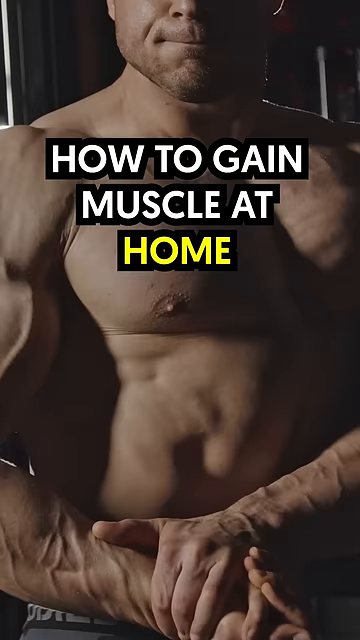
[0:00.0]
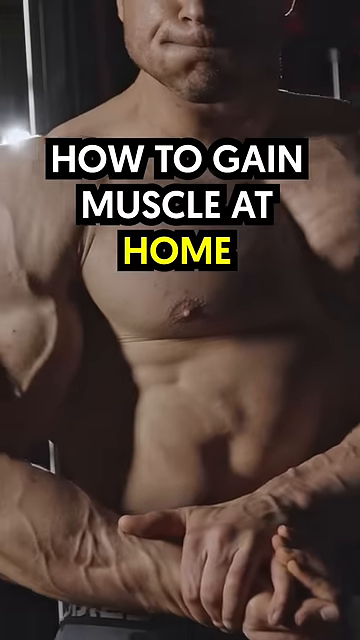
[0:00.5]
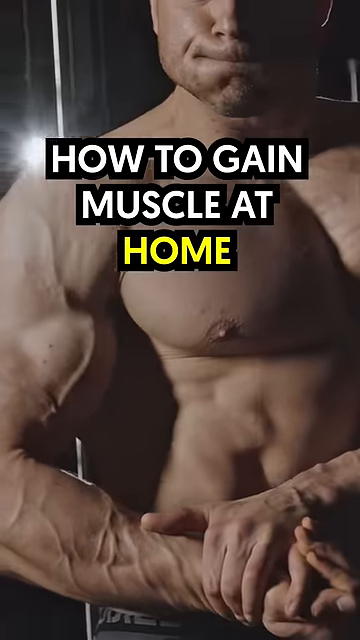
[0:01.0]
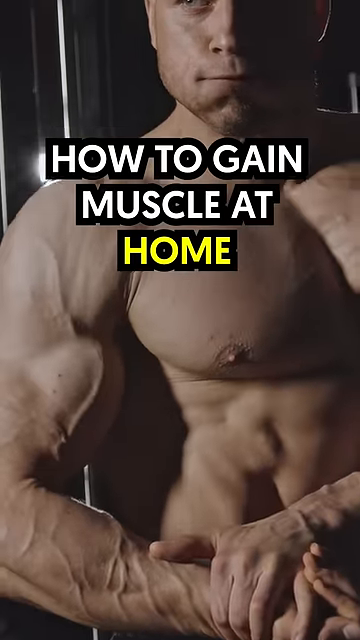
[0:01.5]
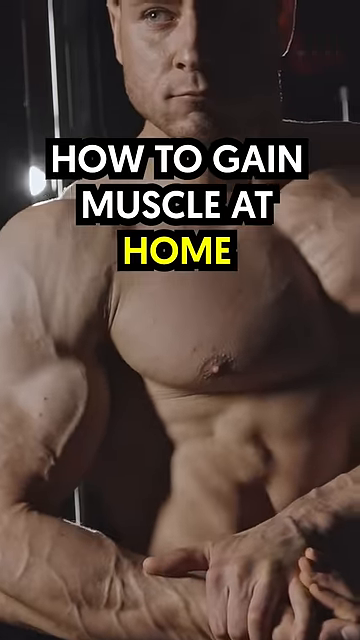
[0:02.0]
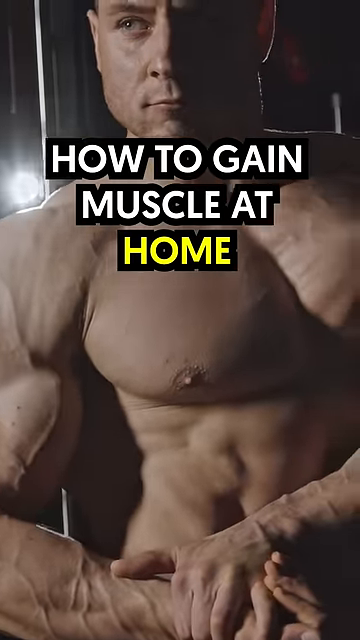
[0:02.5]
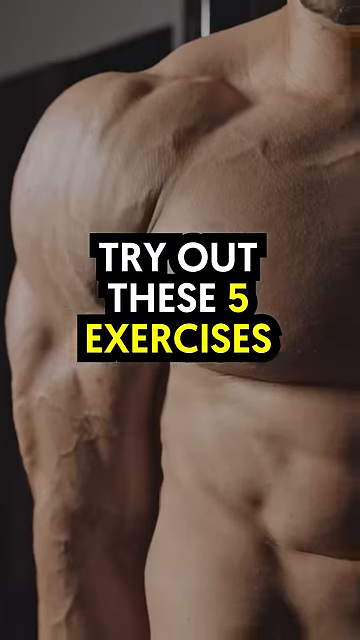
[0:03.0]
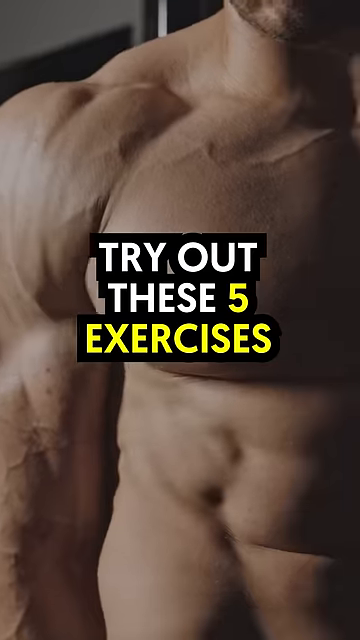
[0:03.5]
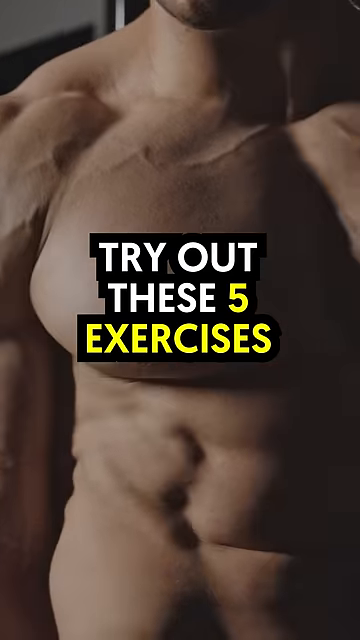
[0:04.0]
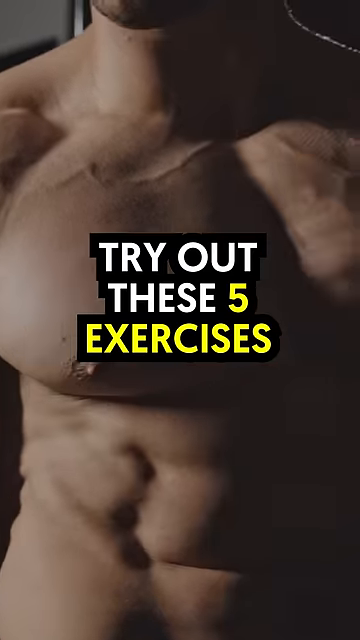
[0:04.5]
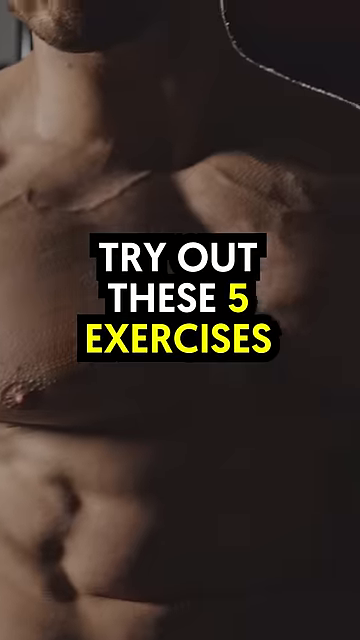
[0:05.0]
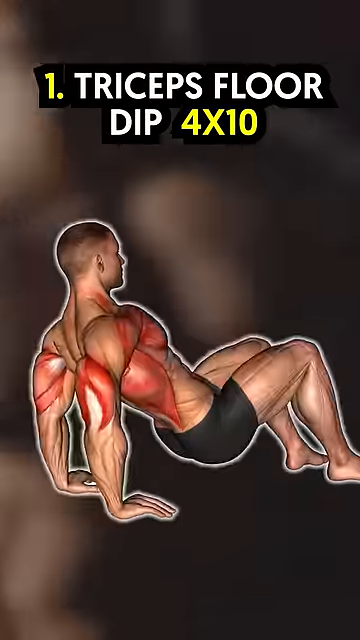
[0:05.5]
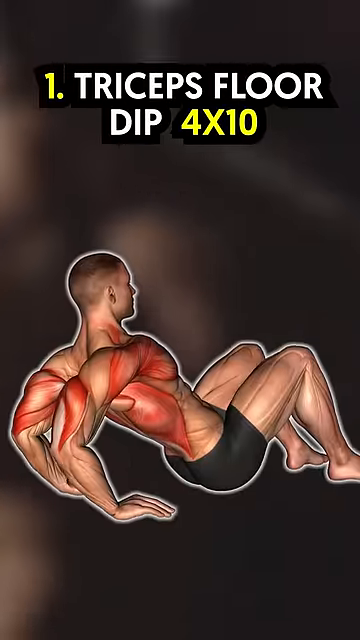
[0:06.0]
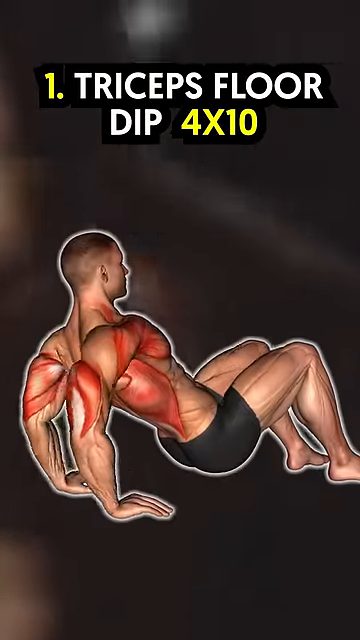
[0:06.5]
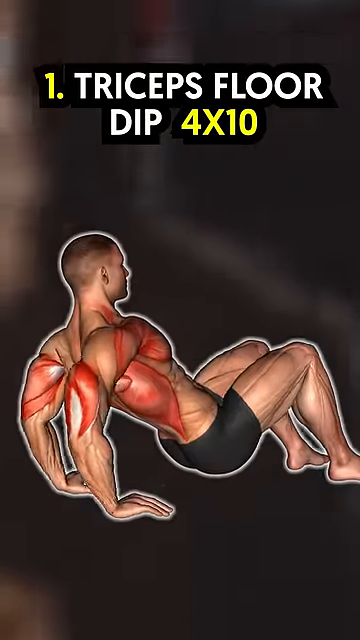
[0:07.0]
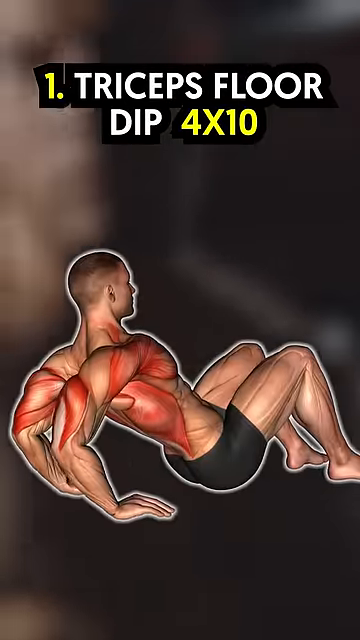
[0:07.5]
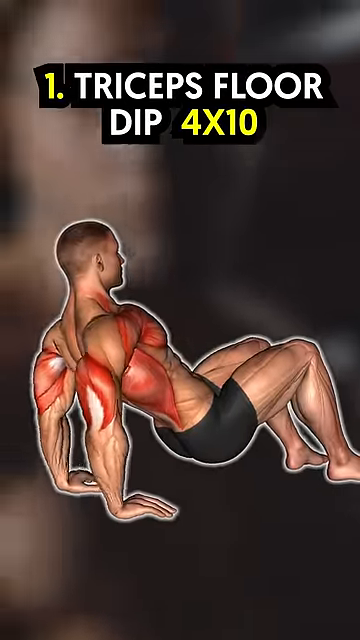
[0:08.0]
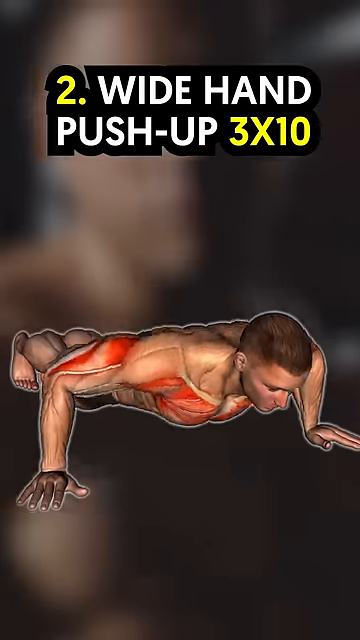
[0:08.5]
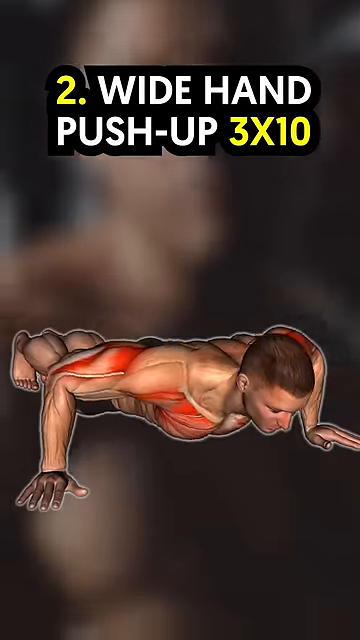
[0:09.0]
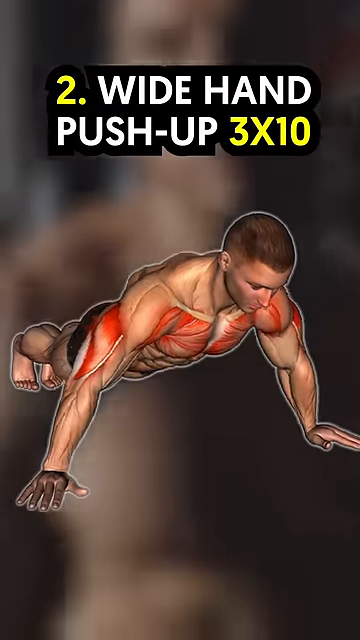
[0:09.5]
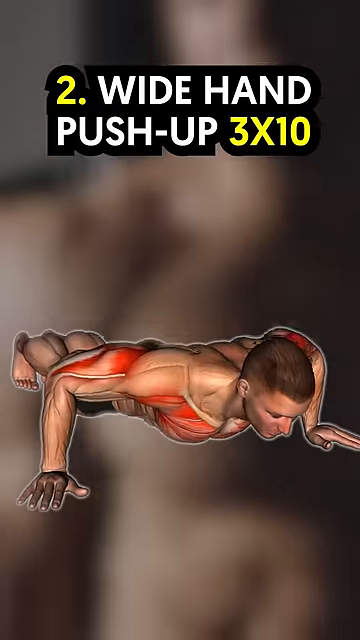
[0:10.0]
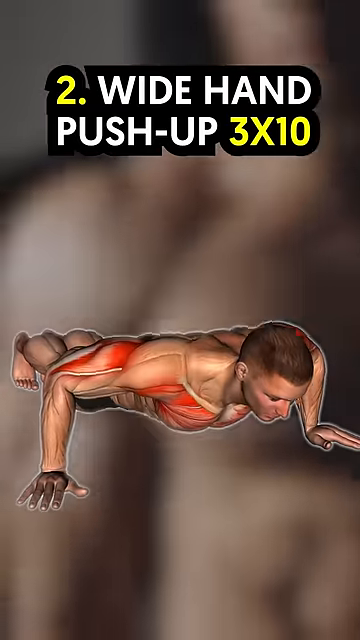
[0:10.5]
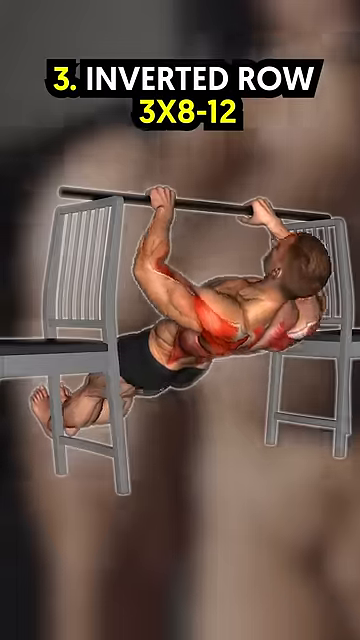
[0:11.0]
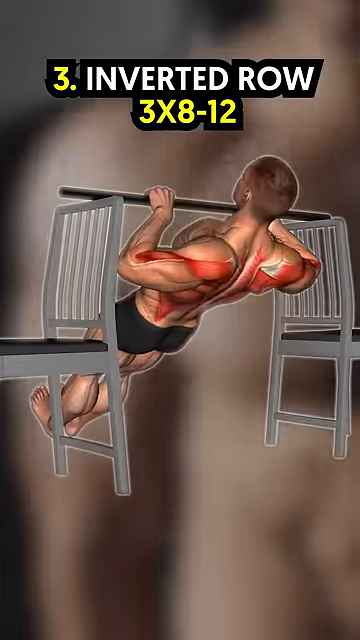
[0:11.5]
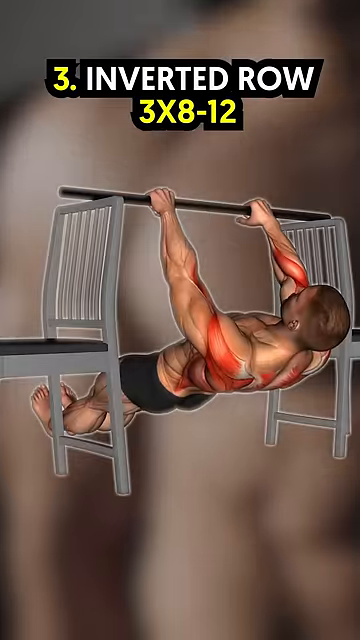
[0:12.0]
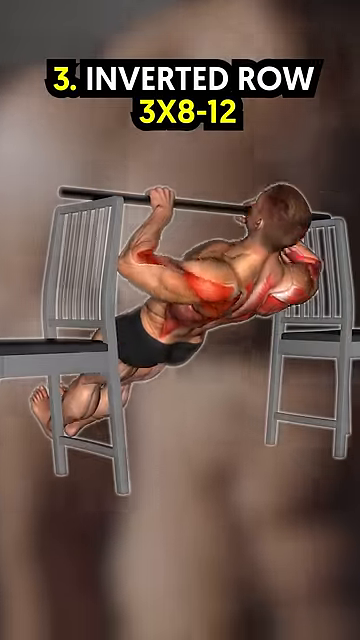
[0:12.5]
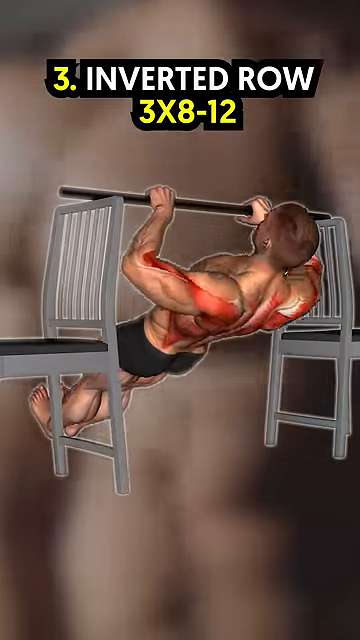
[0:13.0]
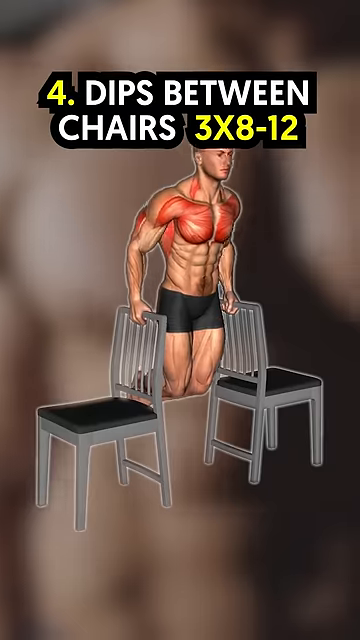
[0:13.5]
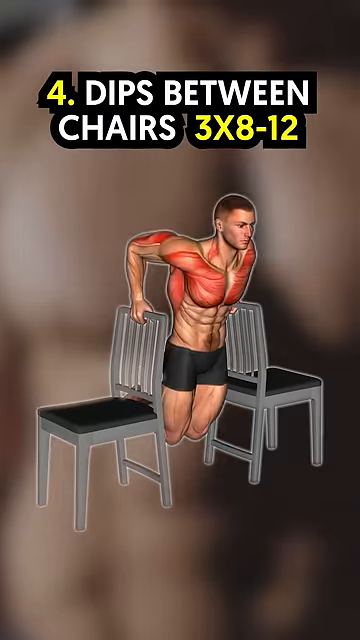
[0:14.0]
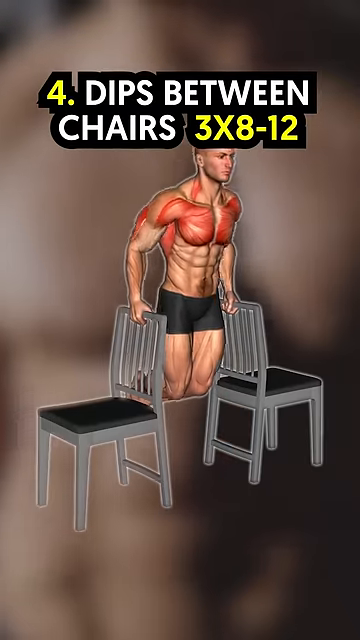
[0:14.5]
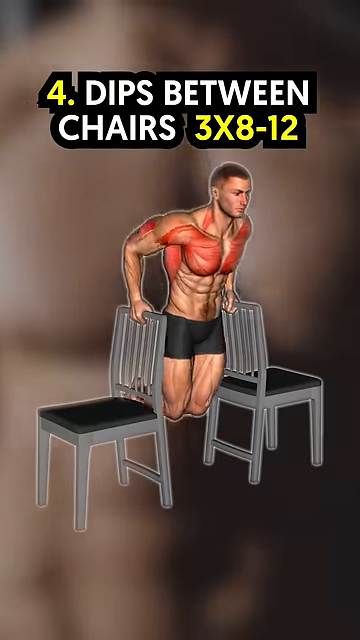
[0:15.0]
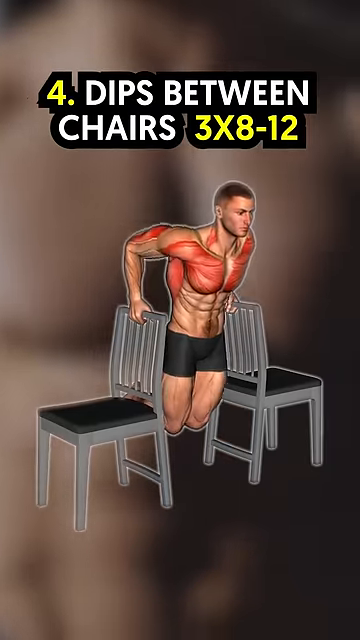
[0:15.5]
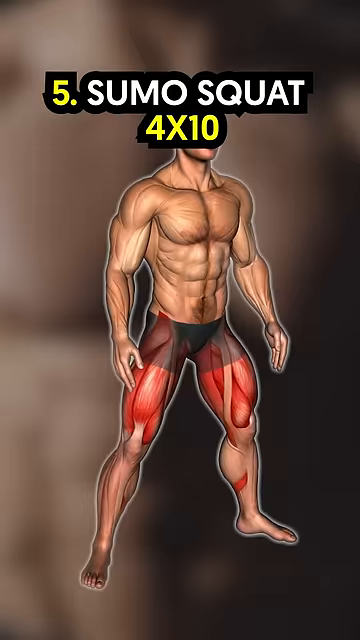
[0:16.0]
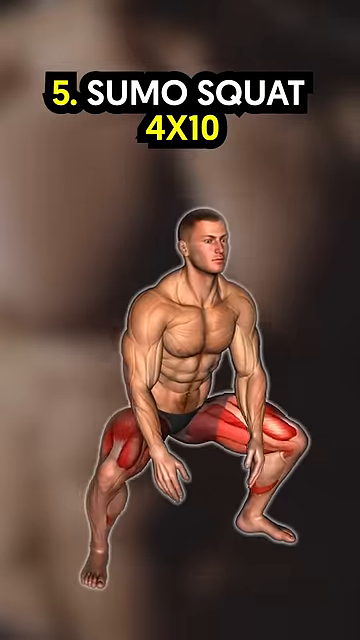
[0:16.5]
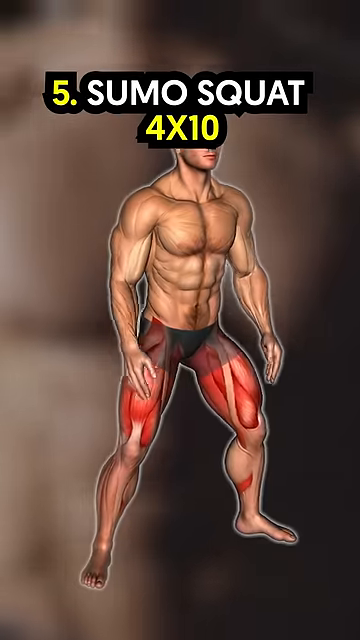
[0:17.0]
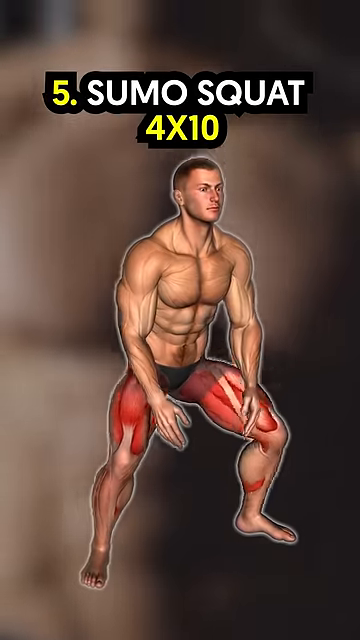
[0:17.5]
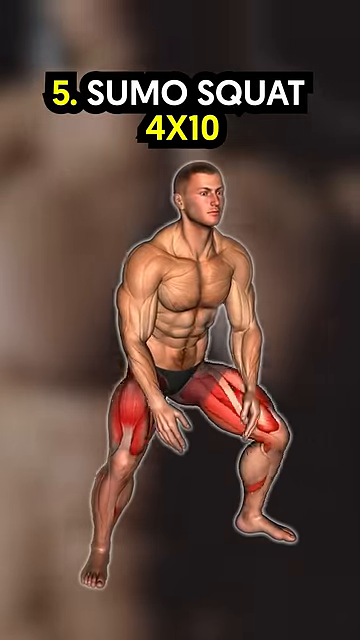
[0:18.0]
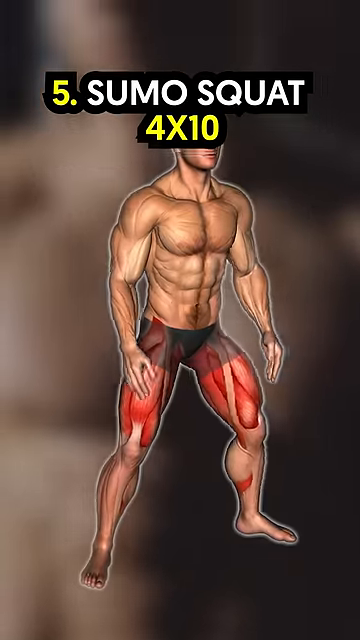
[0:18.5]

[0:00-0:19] The video is about how to gain muscle at home, and it looks like it was taken on a phone, with black bars on either side. A little skeleton-looking figure is in the bottom right-hand corner. It presents five different exercises that can be done at home. Apart from the very first part, everything is computer images. That opening part shows a very muscular man without his top on, showing off his muscles. The setting then changes to illustrations of a man doing different exercises. The text first reads "how to gain muscle at home. Try out these five exercises." The exercises follow: "One, triceps floor, dip four times ten," "Two, wide hand pushup. Three times ten," "three is inverted row, three times eight," "Number four is dips between chairs," and "Number five is sumo squat."